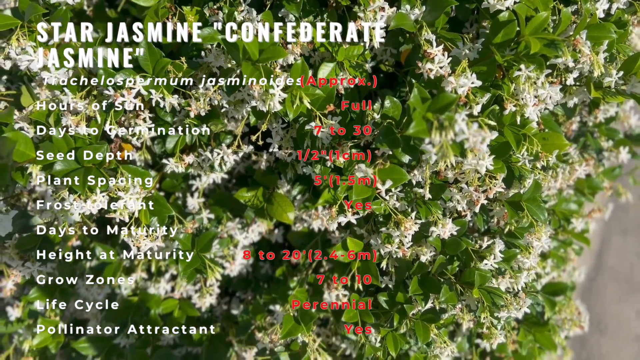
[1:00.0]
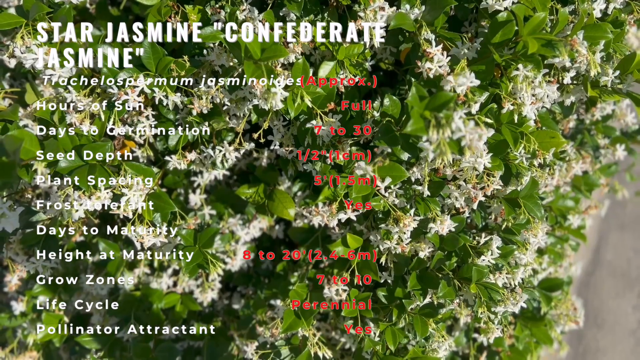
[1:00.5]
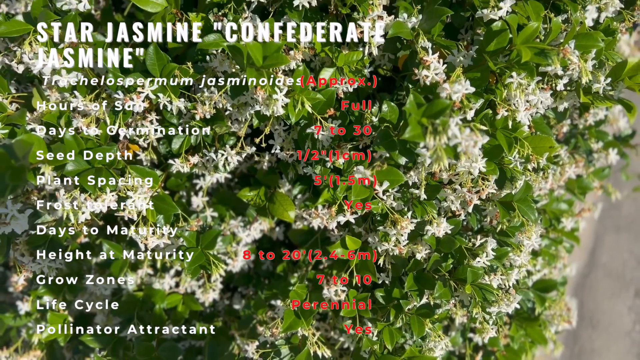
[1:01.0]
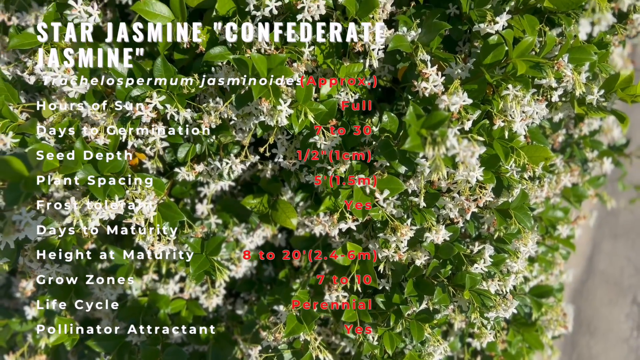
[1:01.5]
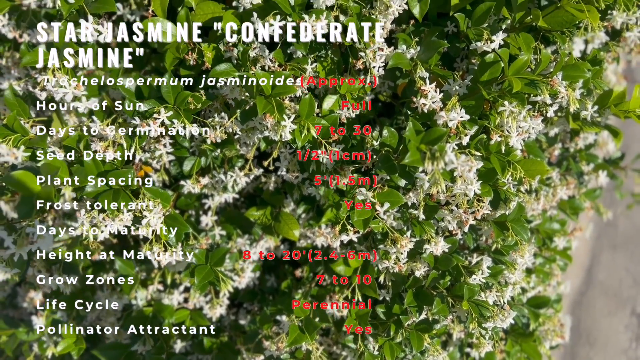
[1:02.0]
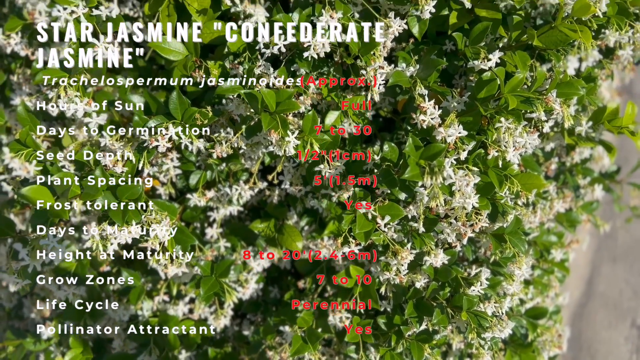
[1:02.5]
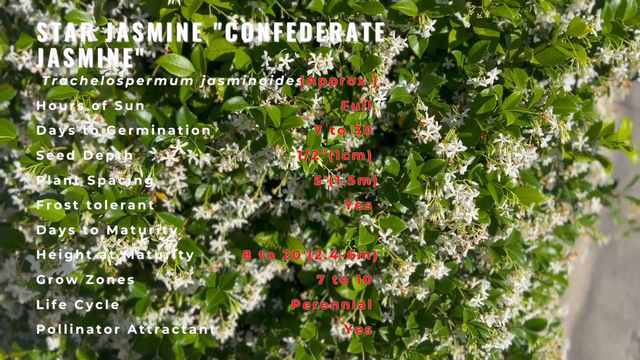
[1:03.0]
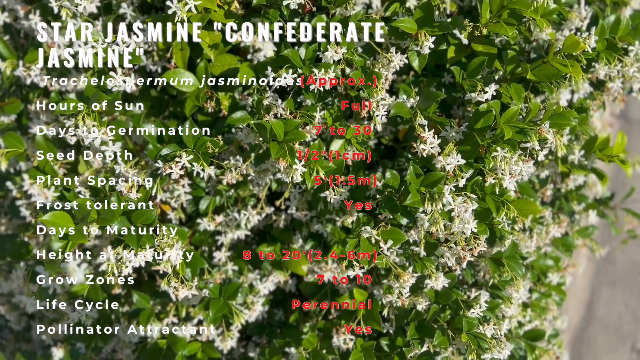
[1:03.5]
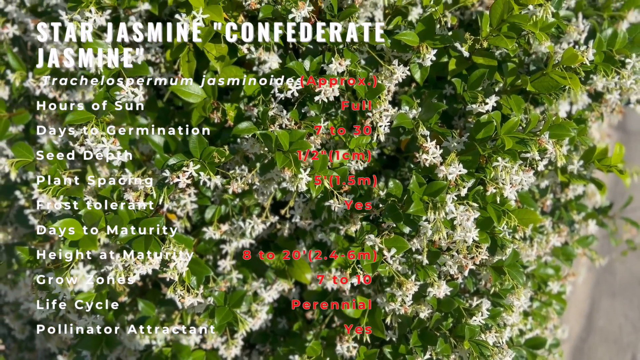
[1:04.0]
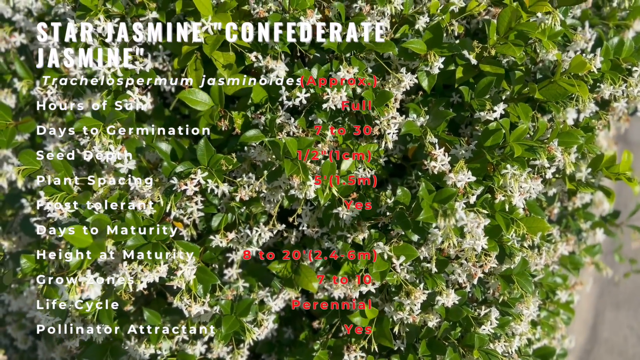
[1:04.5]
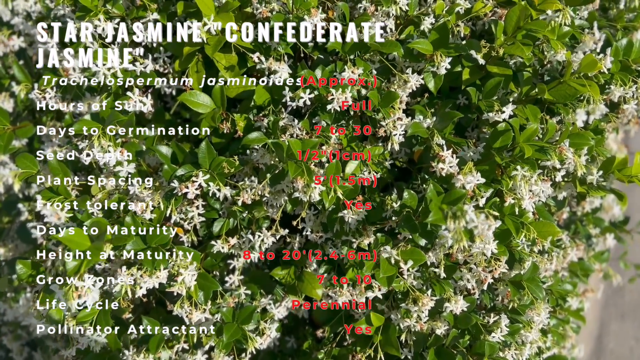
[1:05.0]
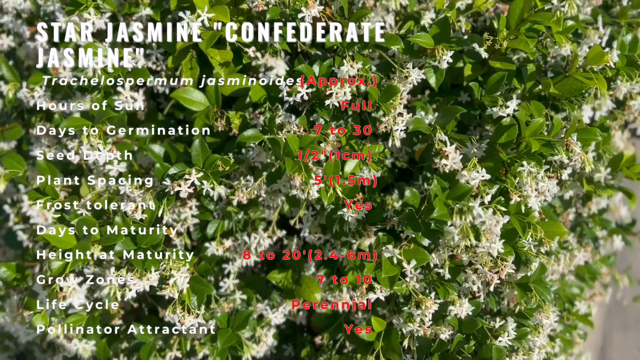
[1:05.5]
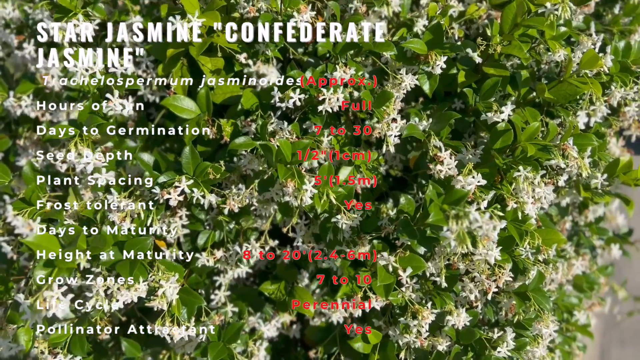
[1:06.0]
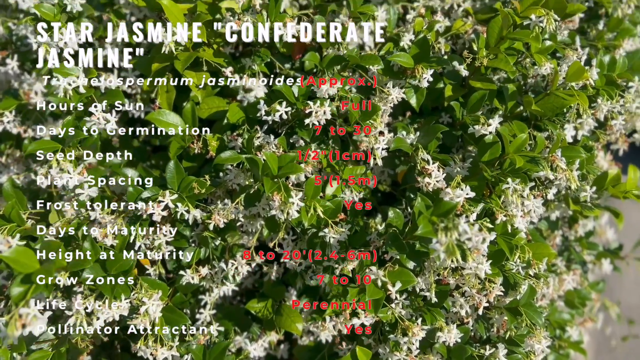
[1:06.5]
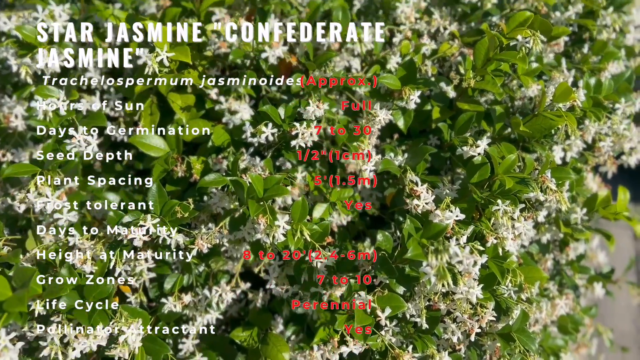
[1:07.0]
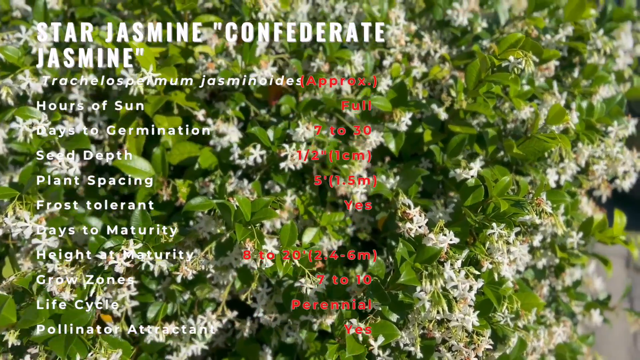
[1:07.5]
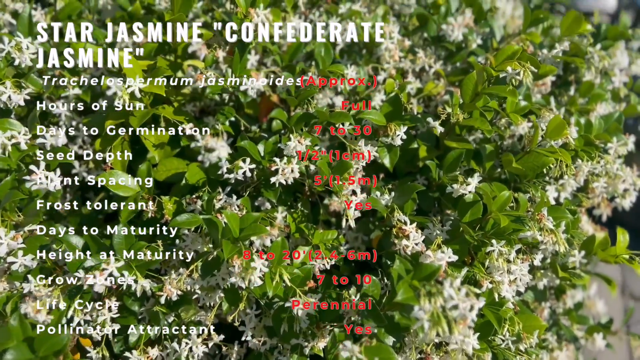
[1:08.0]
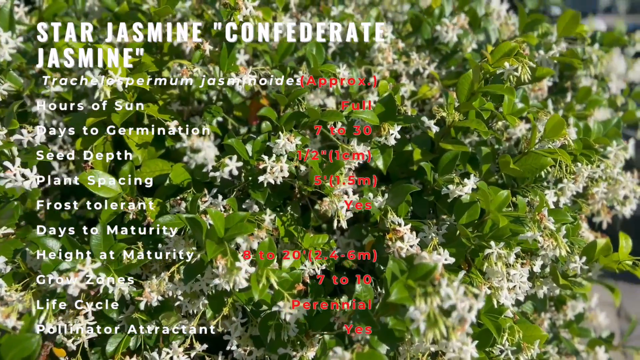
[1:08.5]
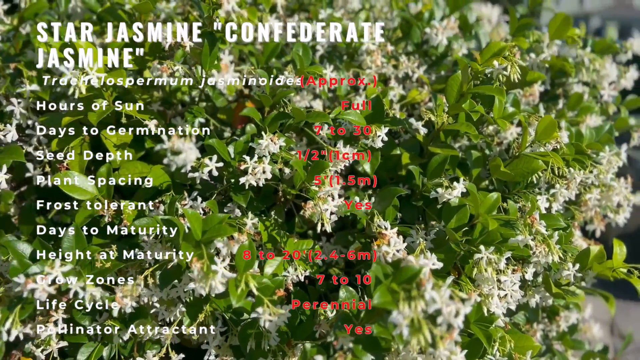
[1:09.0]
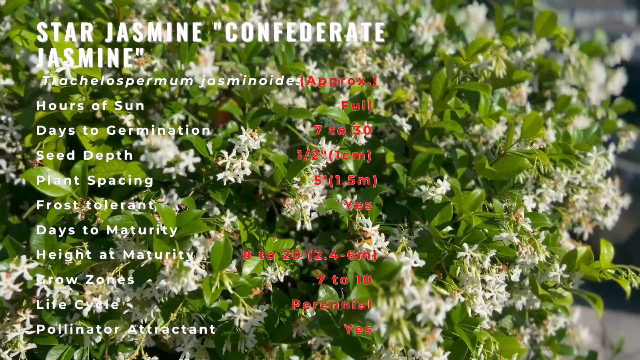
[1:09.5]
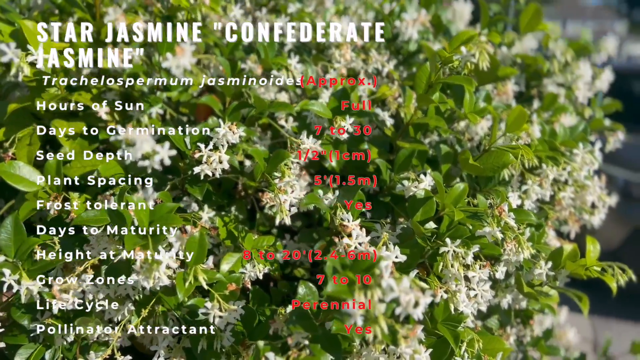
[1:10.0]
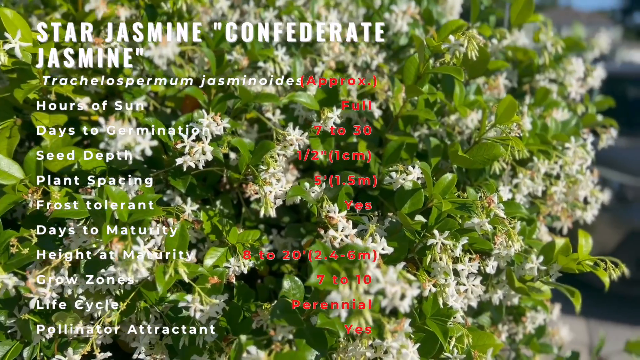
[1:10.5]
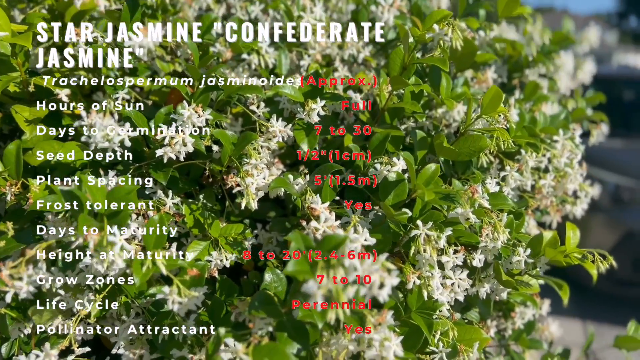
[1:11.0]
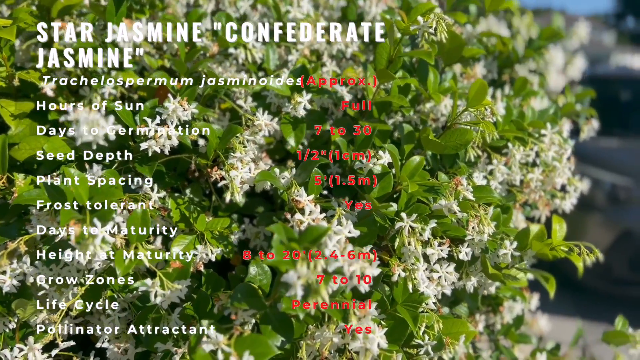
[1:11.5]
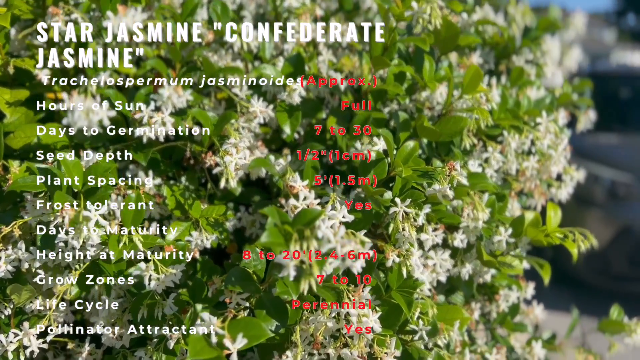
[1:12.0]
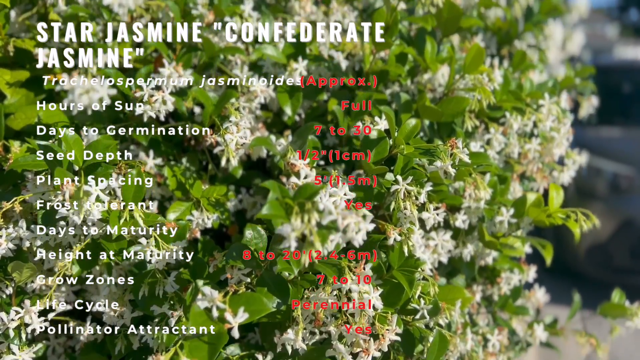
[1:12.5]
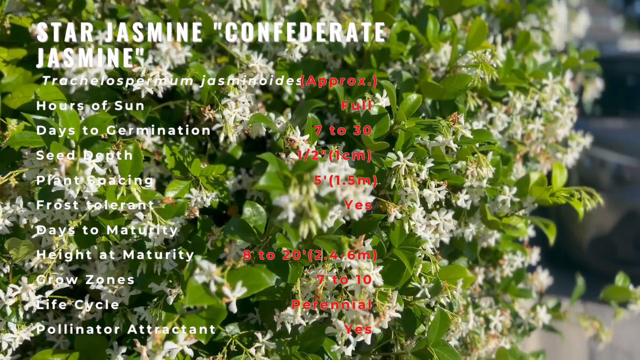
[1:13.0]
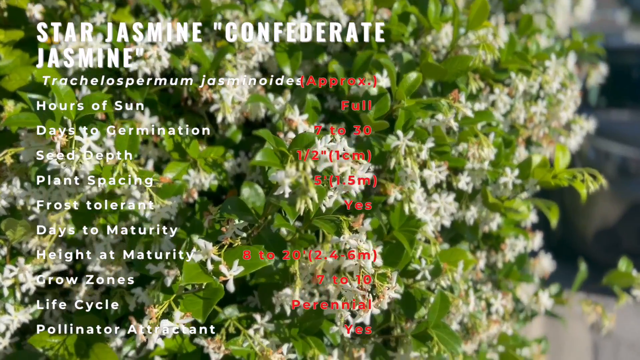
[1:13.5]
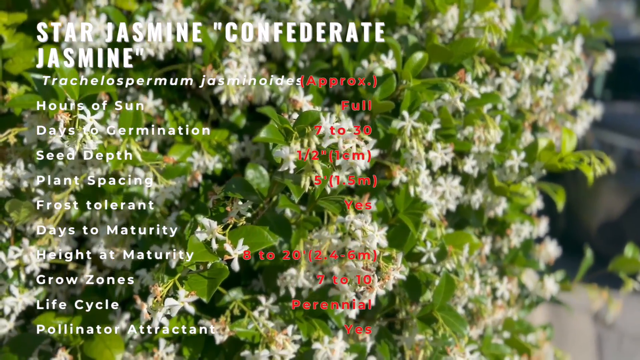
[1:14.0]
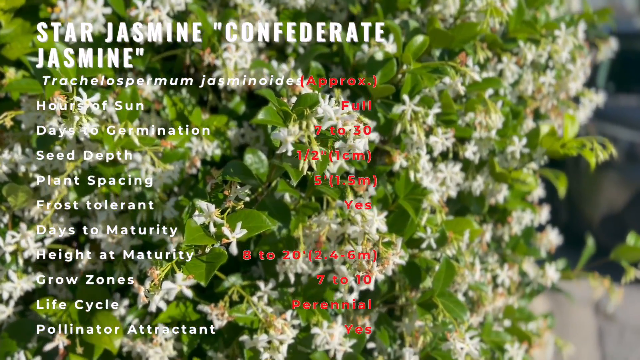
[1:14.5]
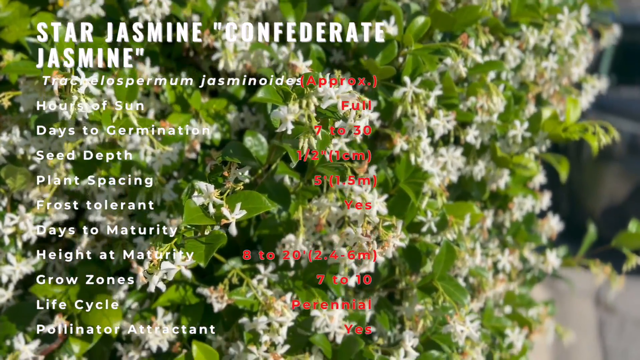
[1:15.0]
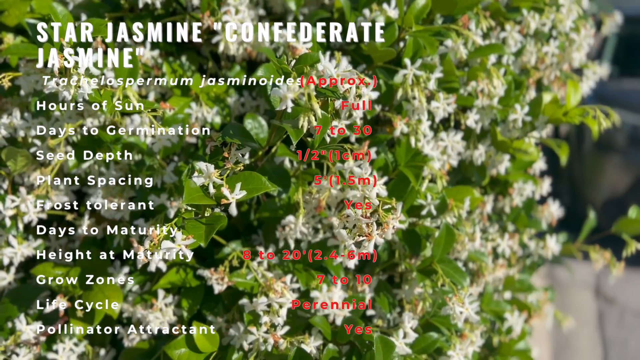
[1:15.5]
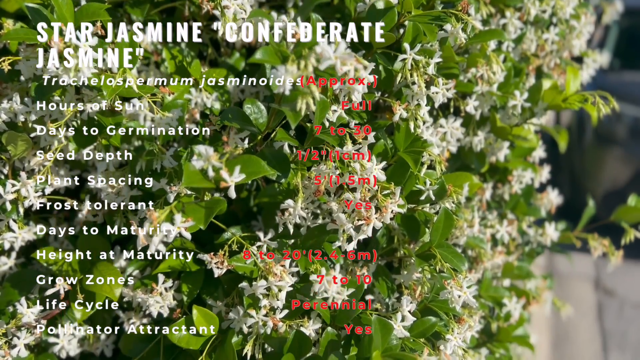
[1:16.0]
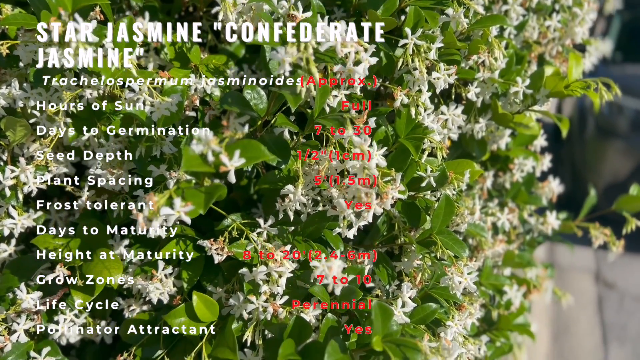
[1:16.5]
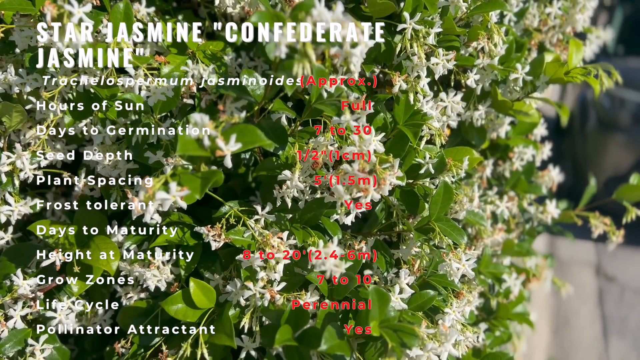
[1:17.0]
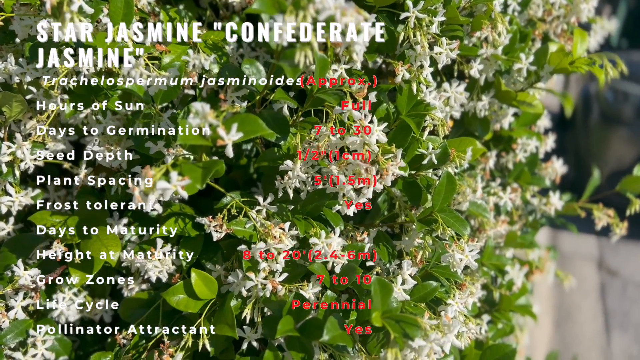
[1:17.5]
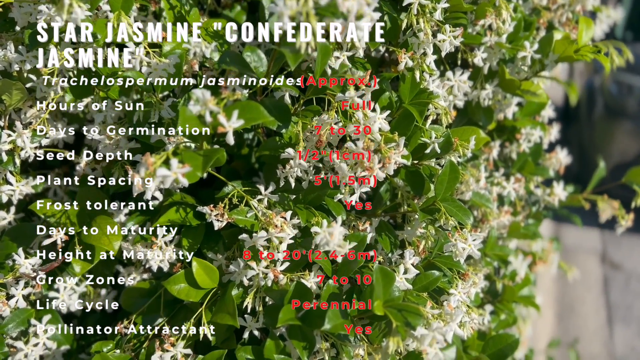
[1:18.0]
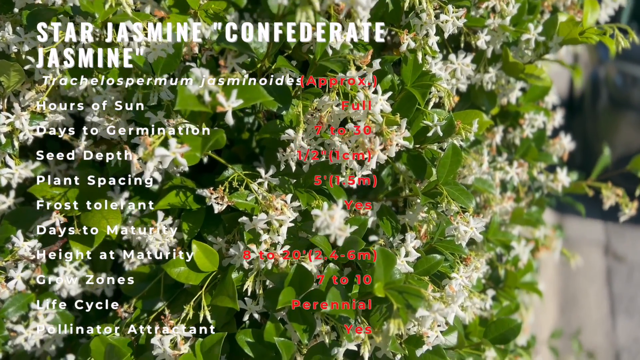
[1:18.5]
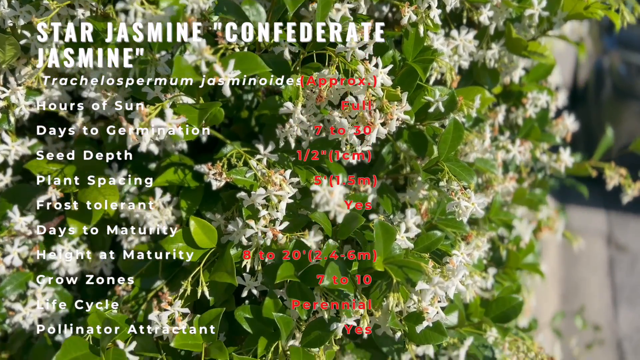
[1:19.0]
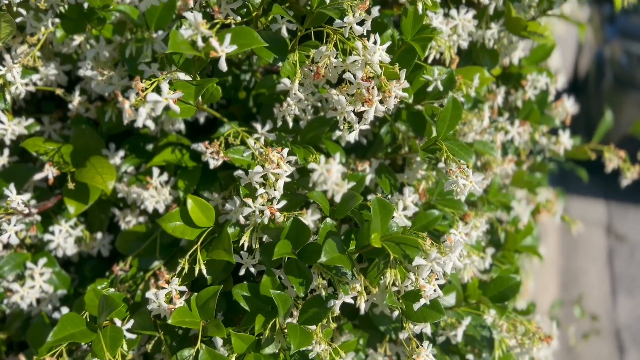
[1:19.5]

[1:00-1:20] The text shows "star jasmine" and, in white, "confederate", followed by "hours of sun", "days to germination" and "seed depth". The white font blends in with the white petals, making some of it unreadable. On the other side are "days to maturity", "height at maturity" and "grow zone"; the grow zone value is hard to tell, maybe 7 to 10, because the colors in the background overpower the colors of the font. The camera goes out a little and then moves around a bit, giving a better view of the flowers.